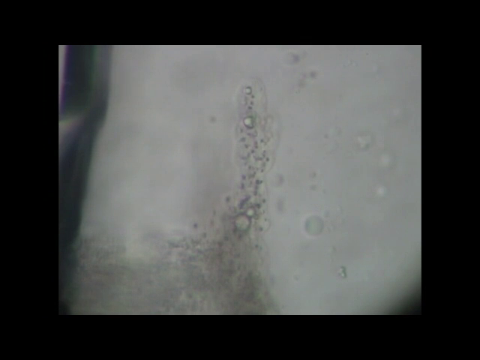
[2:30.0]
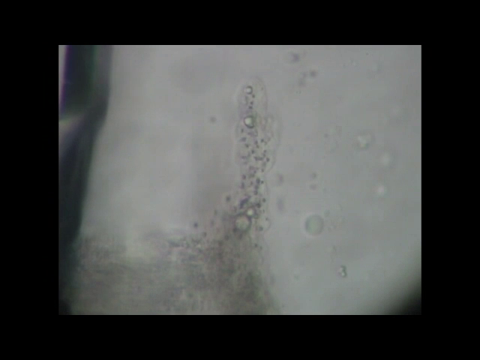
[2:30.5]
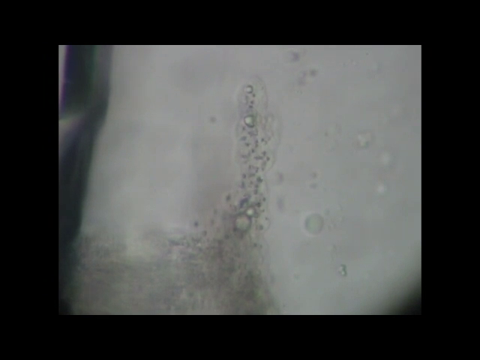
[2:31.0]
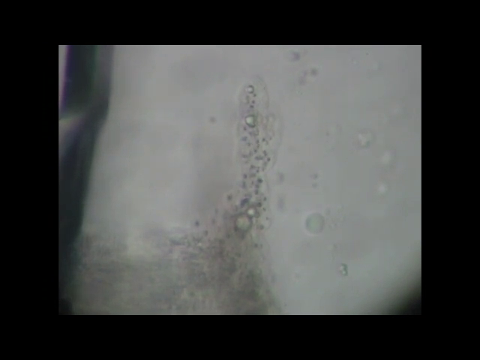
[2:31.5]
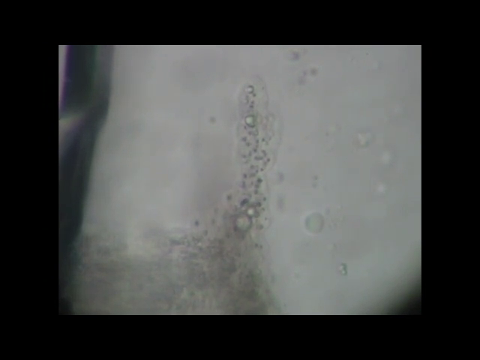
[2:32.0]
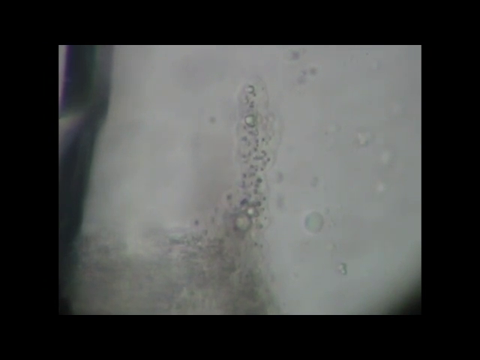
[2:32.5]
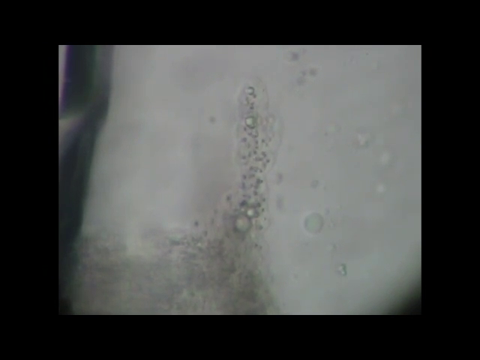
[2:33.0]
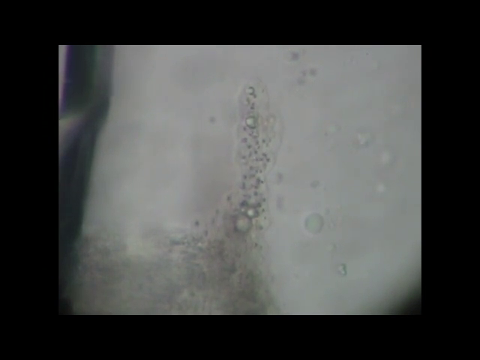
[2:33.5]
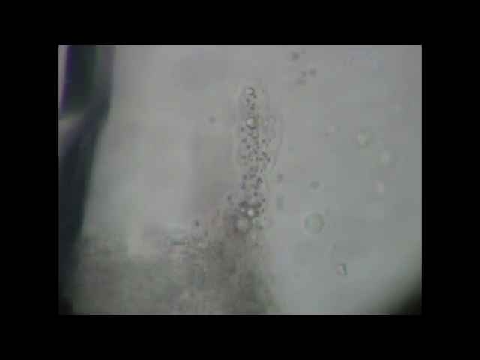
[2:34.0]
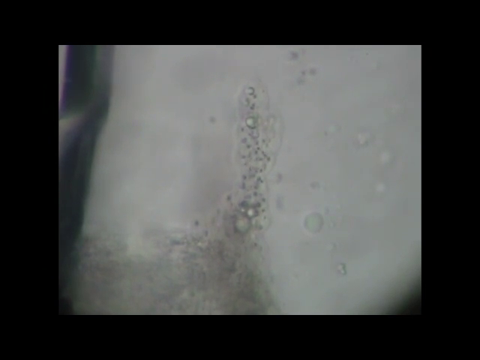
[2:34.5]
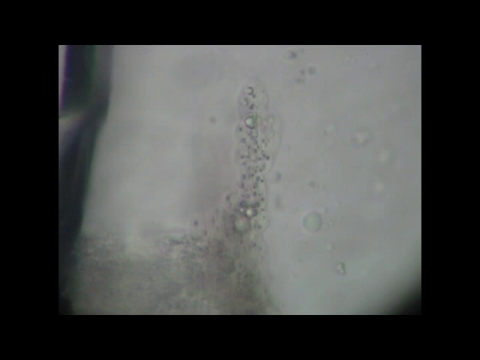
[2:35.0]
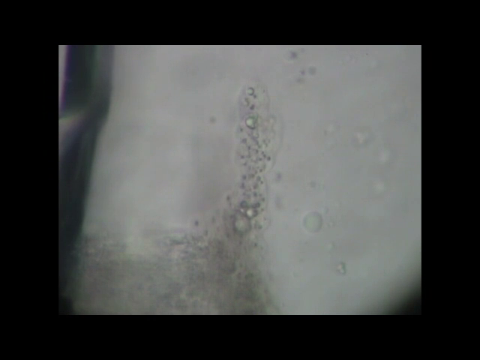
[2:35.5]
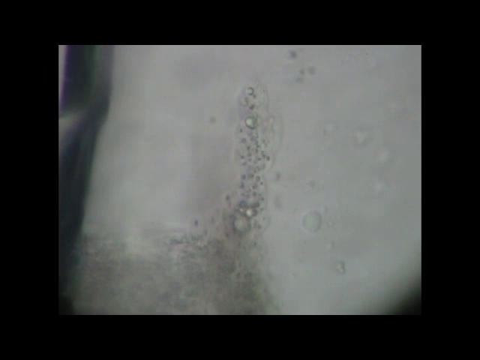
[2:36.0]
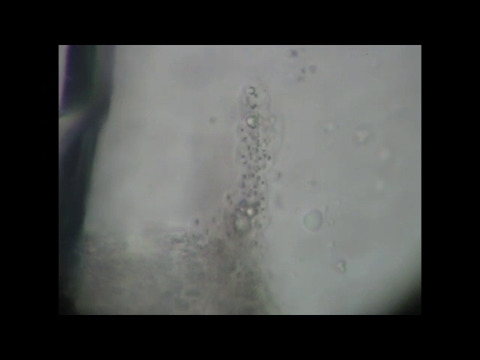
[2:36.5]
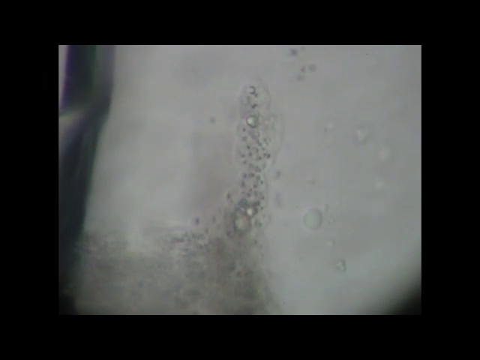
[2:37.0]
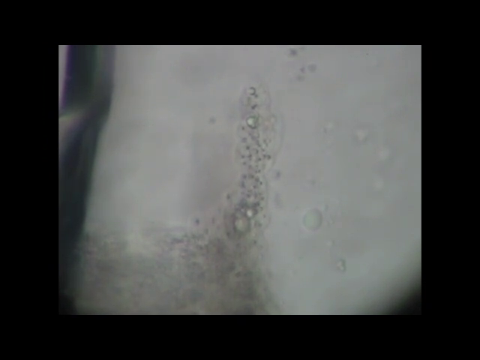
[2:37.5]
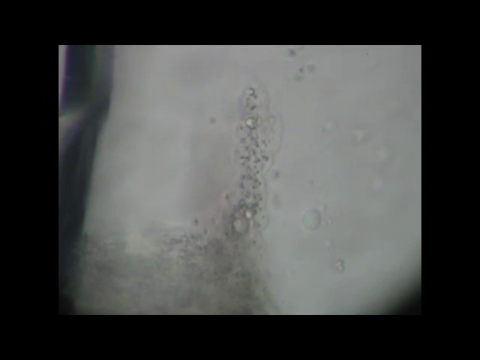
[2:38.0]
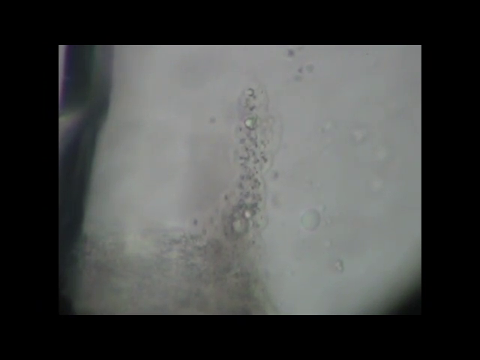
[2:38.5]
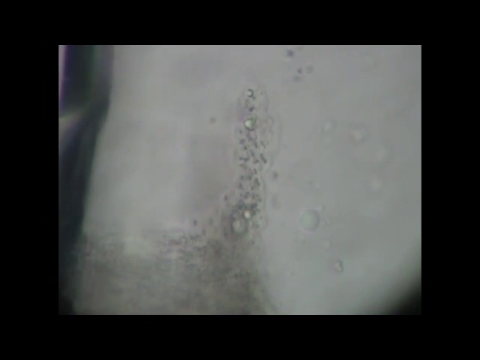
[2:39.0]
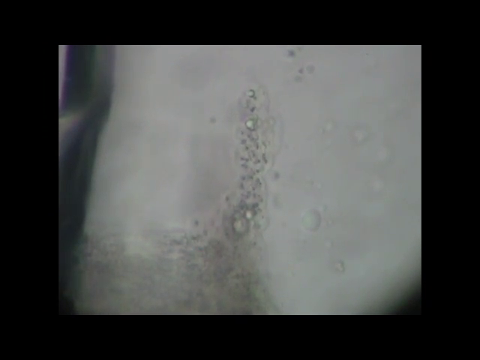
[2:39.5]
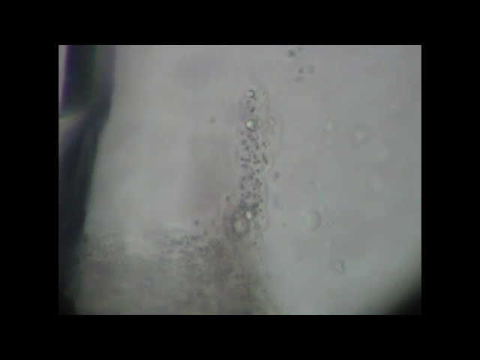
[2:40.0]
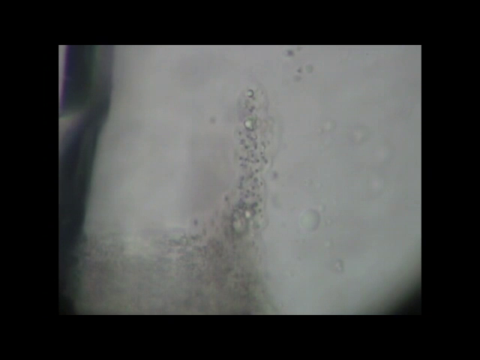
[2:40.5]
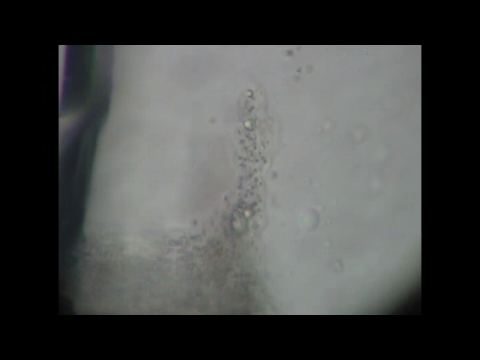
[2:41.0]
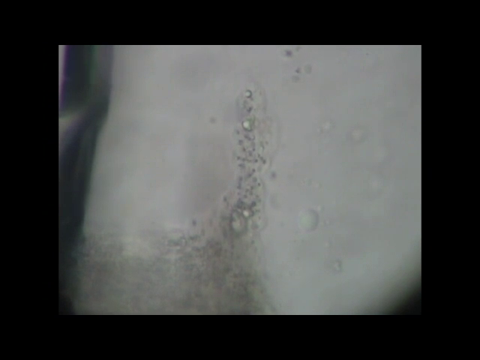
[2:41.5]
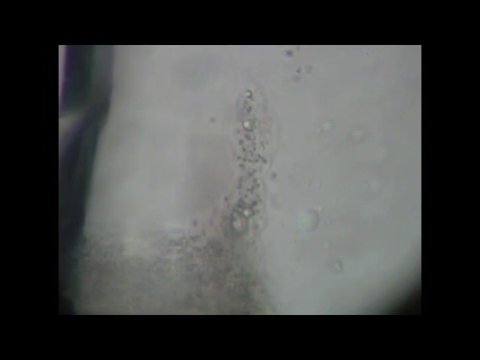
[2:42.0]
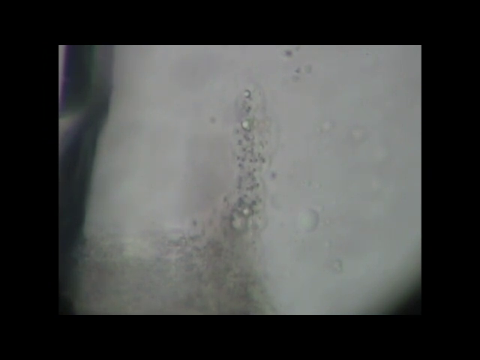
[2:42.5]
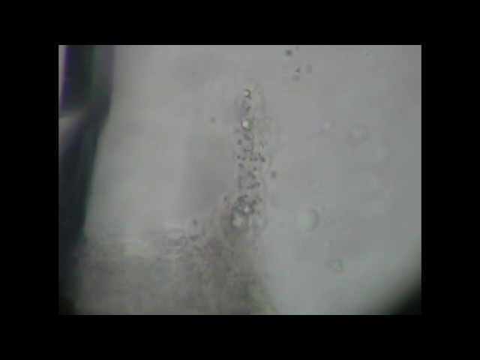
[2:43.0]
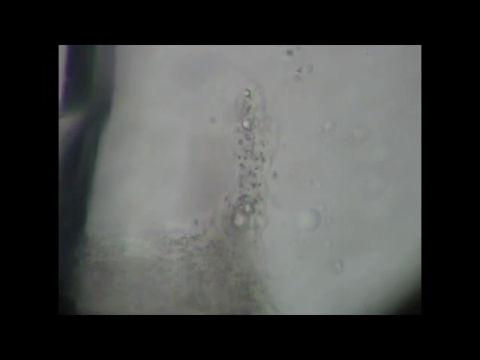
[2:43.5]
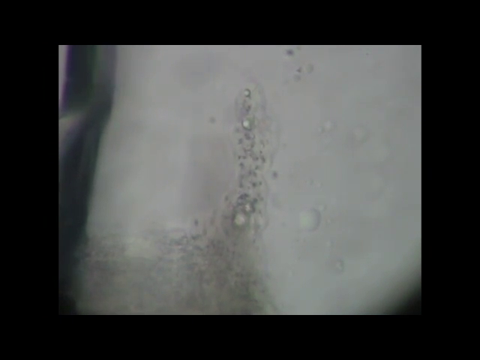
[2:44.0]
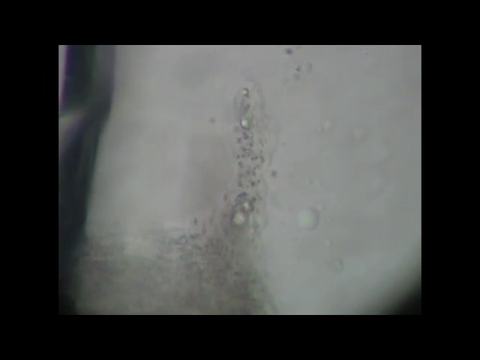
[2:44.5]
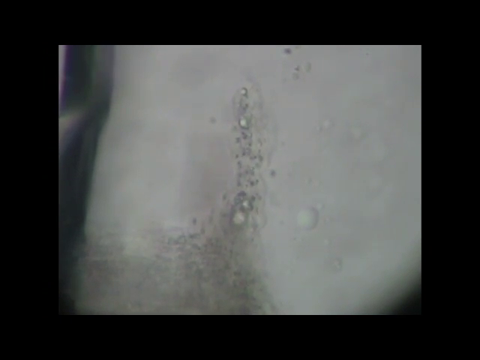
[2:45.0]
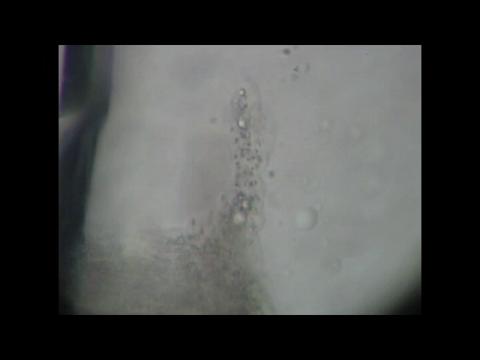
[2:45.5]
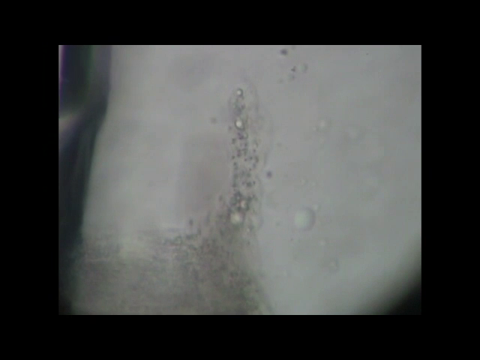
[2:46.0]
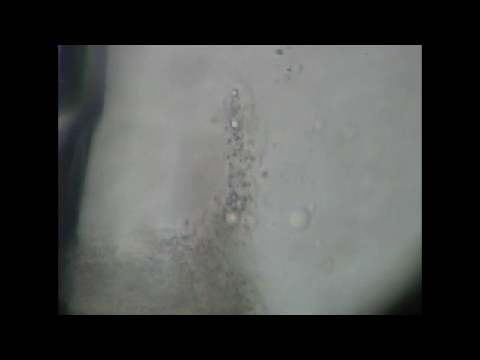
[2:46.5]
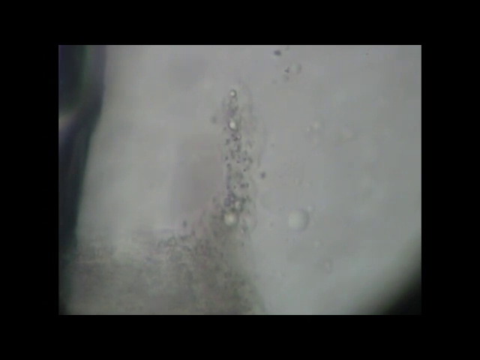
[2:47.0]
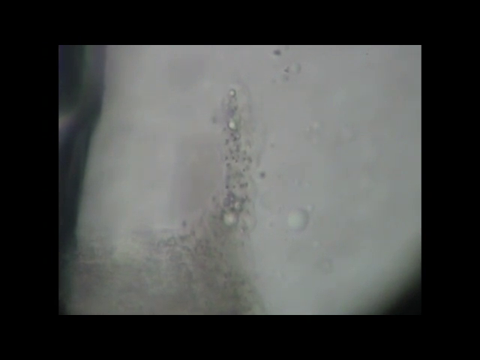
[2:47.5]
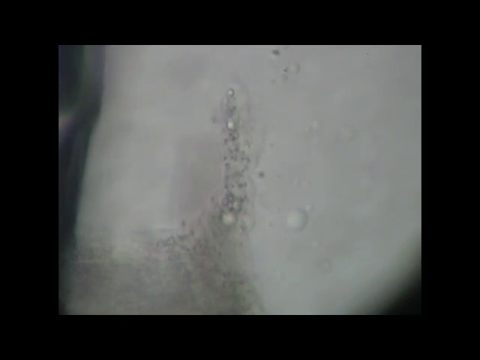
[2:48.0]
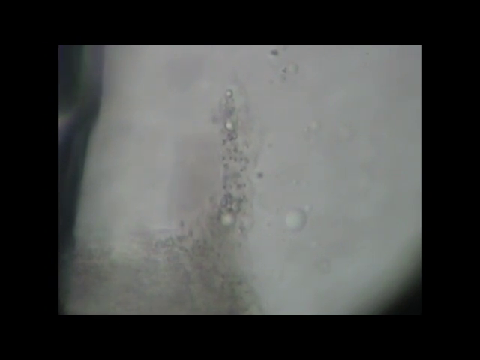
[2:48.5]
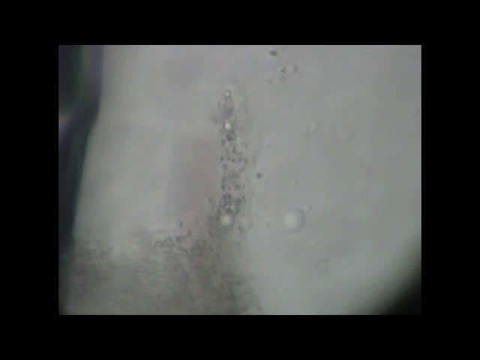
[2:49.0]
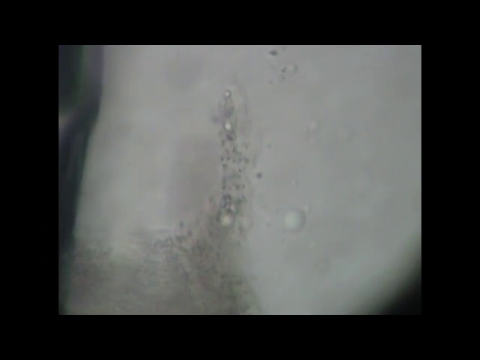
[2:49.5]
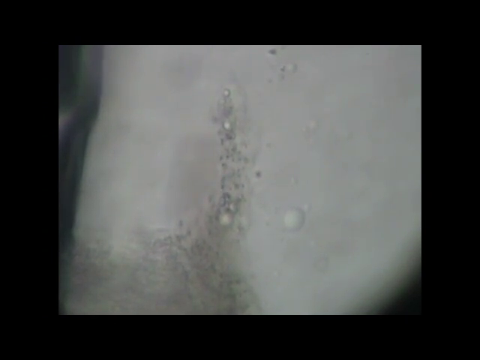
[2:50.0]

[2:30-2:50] Another black-and-white microscopic view is difficult to interpret. The base is a lighter color with some raised areas or what look like bumps in it. Along the center there appears to be liquid or something in which smaller, darker cells look like teeny tiny bumps, almost like a small river of liquid flowing upward instead of down. In the lower left-hand corner there is a darker mass.